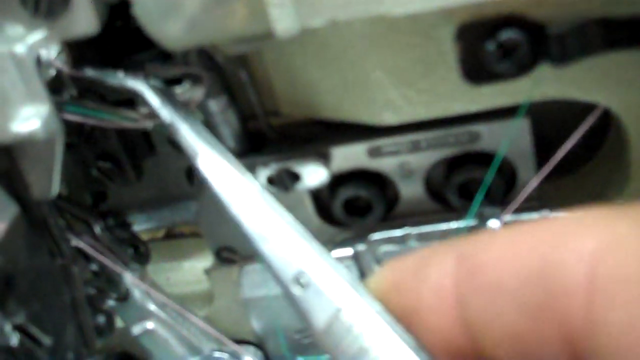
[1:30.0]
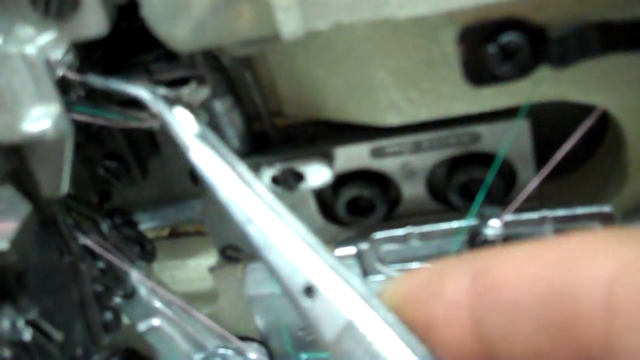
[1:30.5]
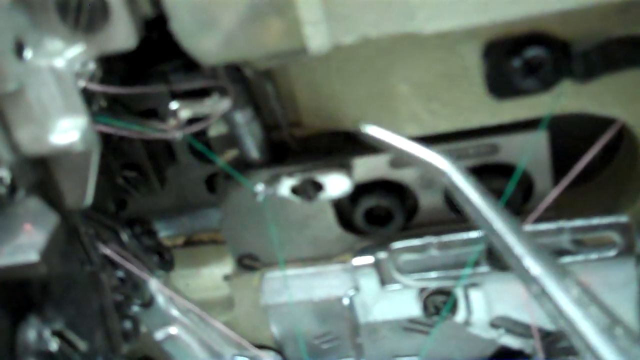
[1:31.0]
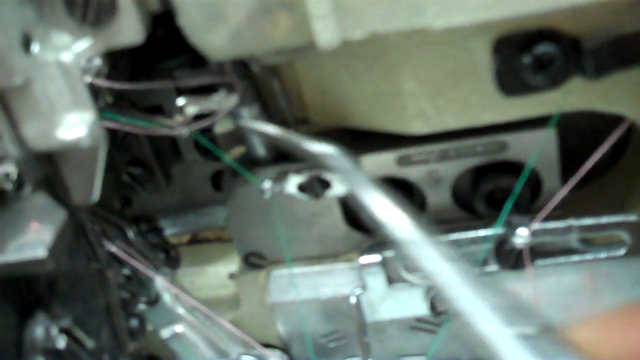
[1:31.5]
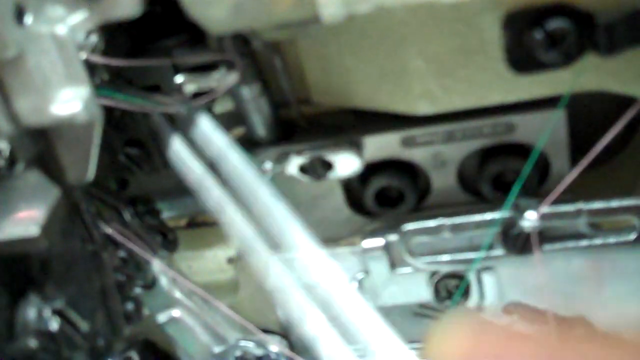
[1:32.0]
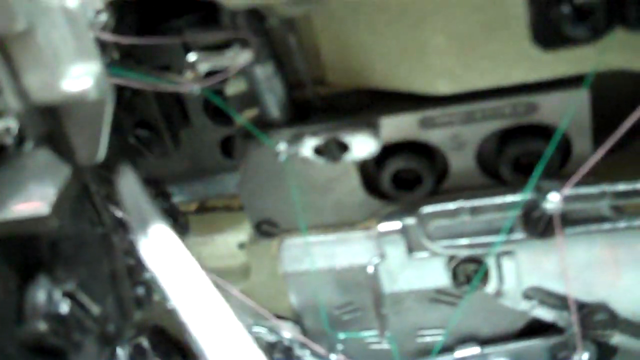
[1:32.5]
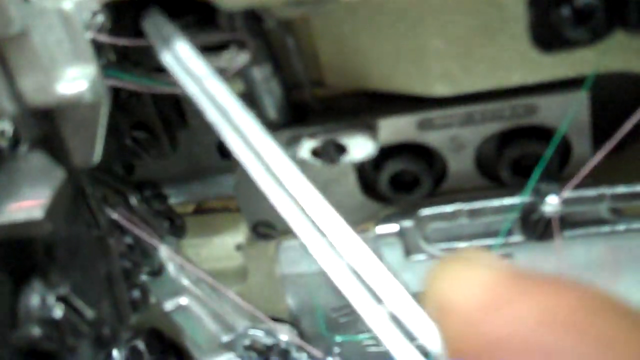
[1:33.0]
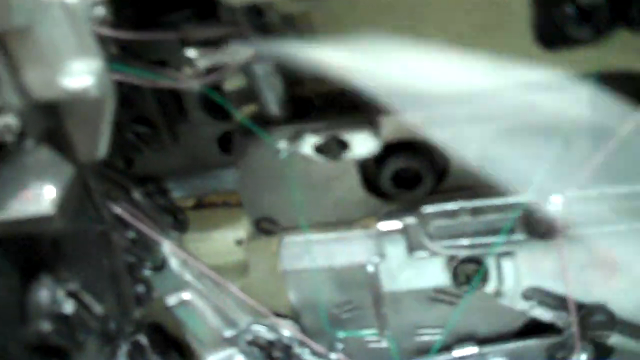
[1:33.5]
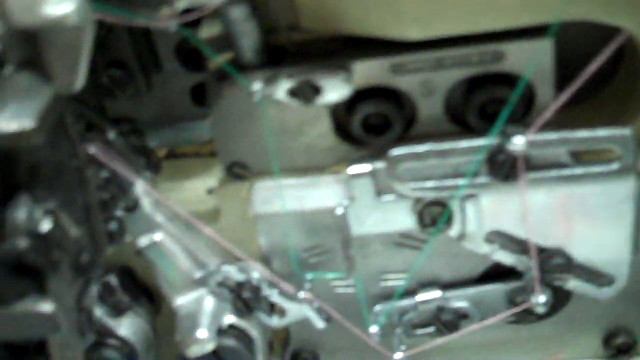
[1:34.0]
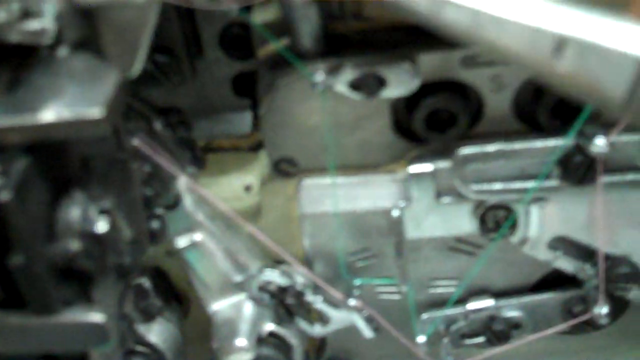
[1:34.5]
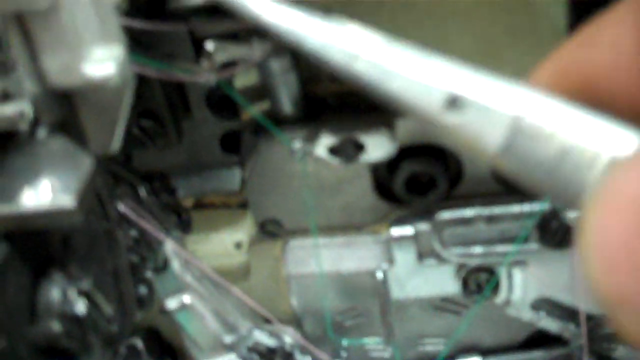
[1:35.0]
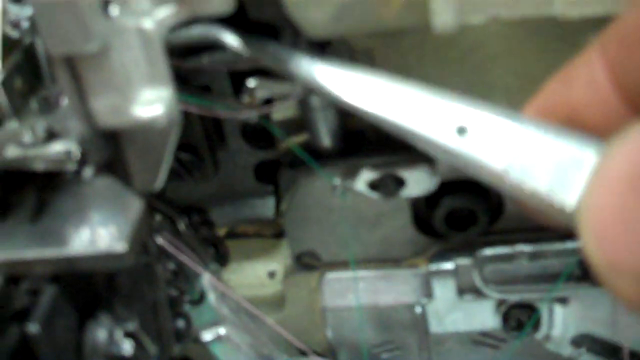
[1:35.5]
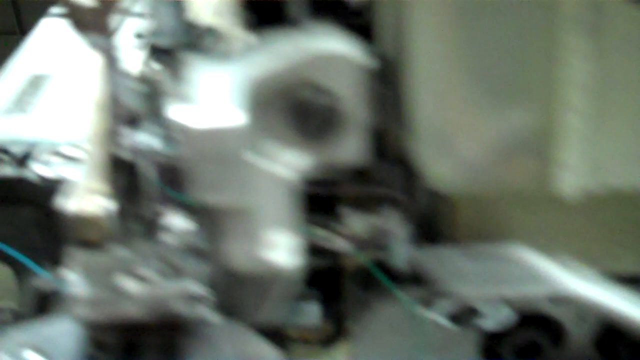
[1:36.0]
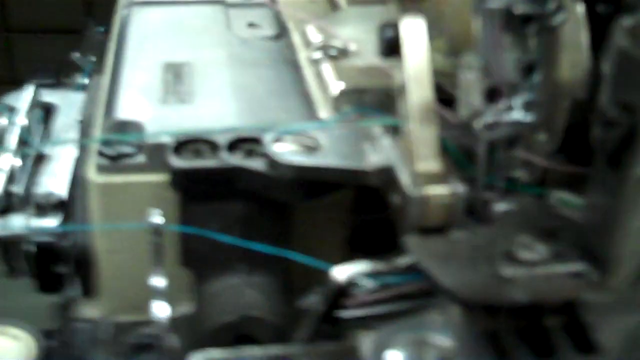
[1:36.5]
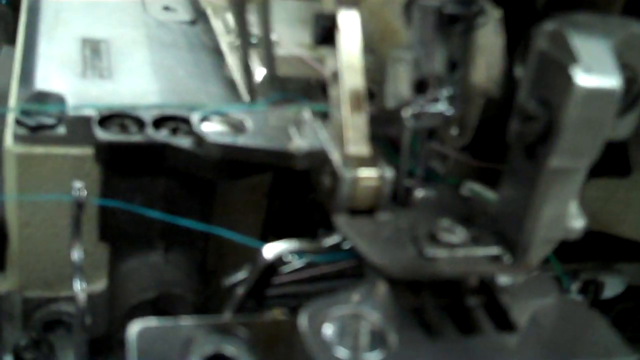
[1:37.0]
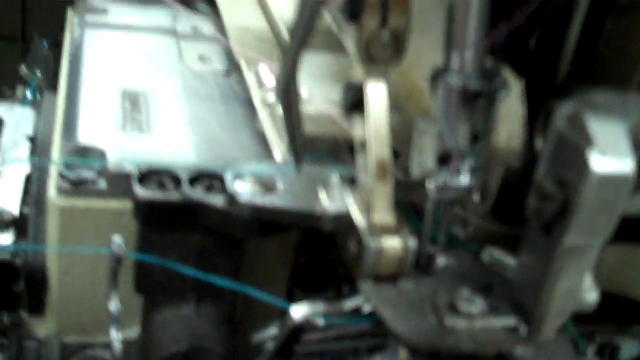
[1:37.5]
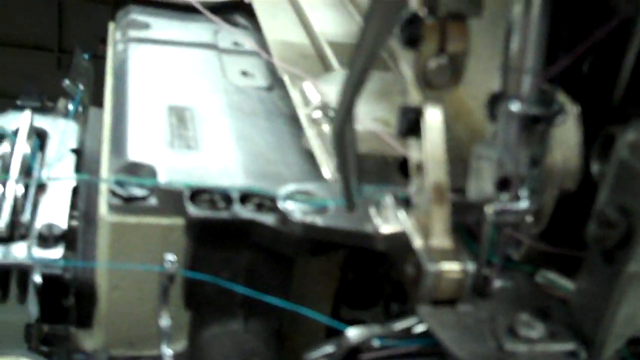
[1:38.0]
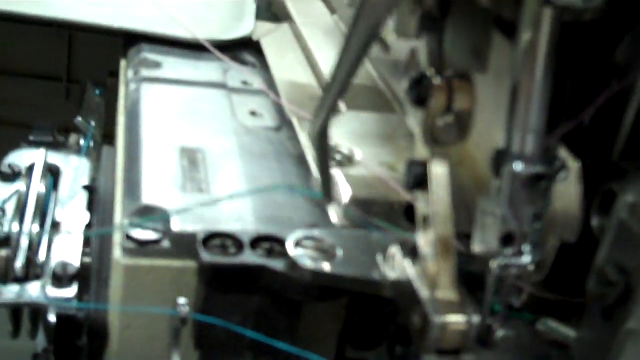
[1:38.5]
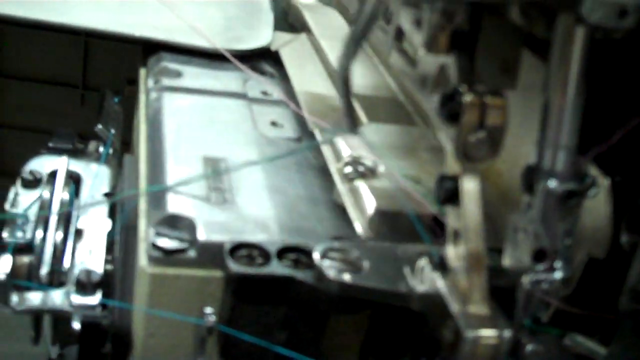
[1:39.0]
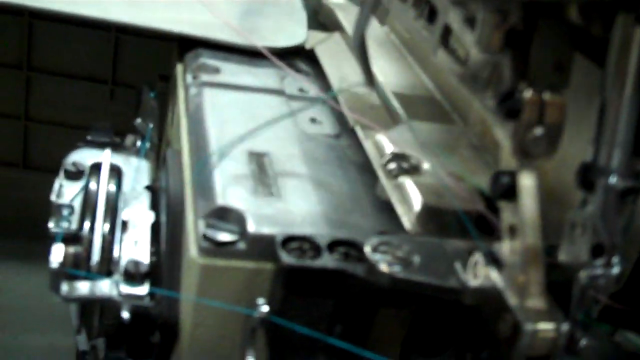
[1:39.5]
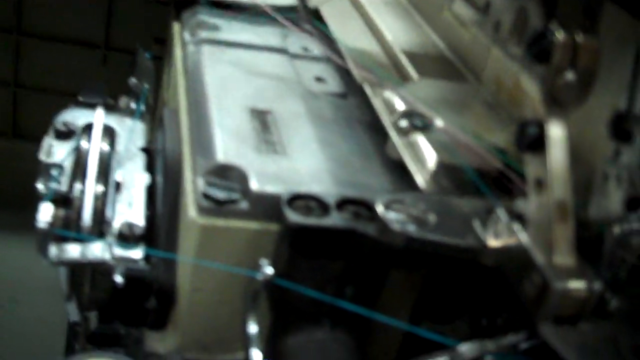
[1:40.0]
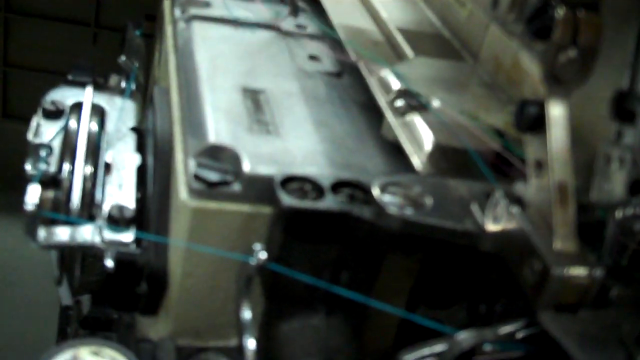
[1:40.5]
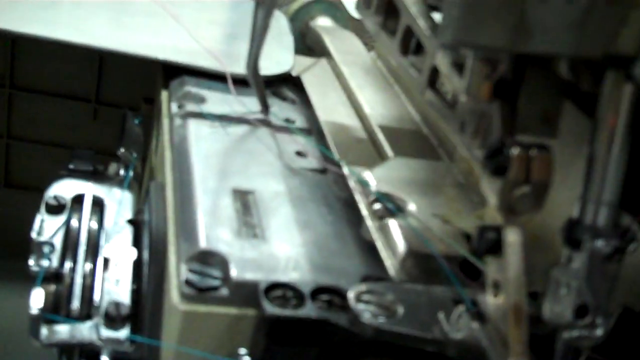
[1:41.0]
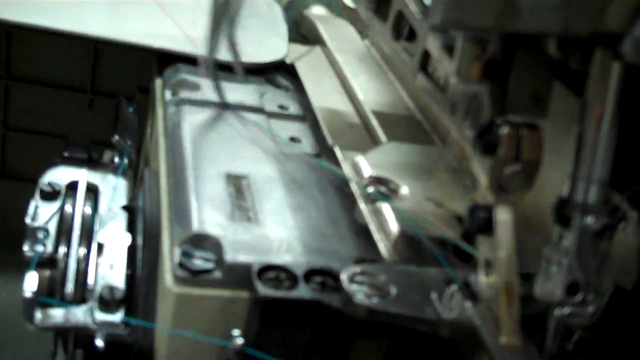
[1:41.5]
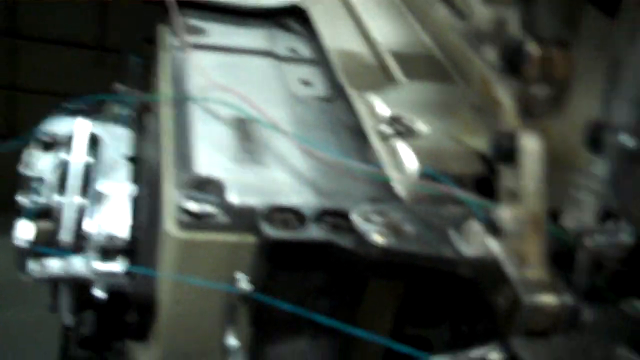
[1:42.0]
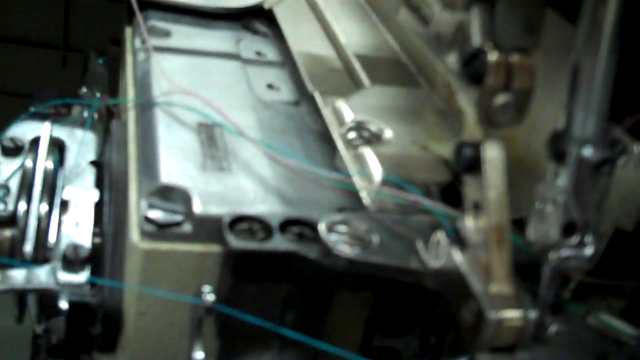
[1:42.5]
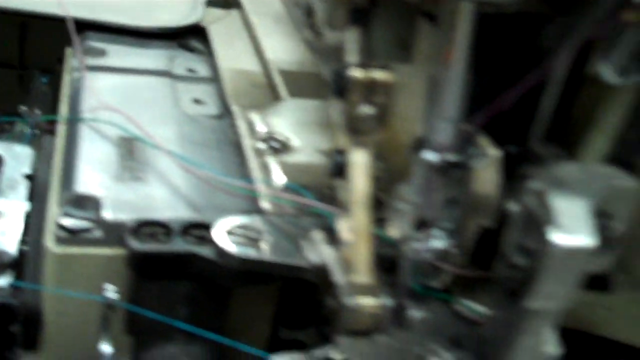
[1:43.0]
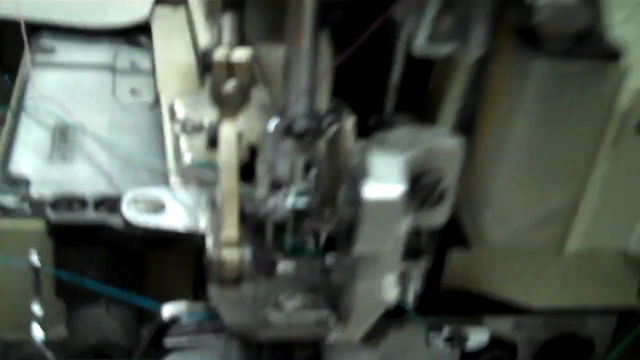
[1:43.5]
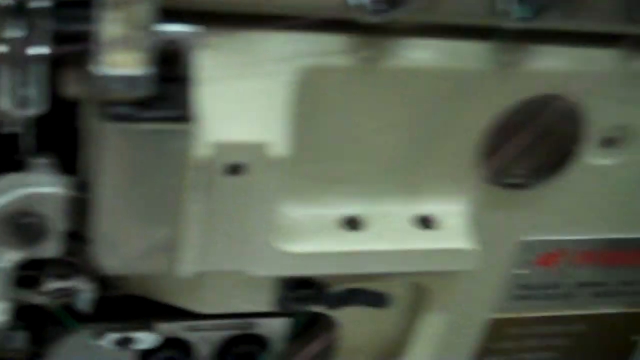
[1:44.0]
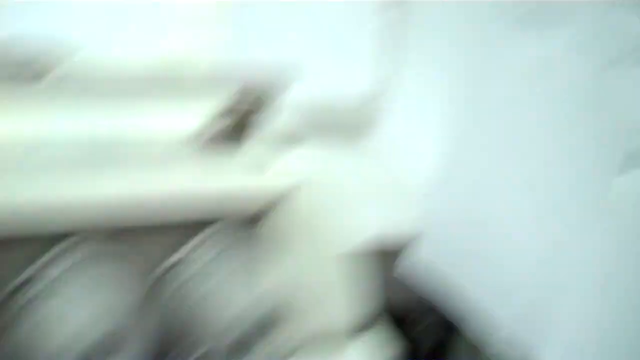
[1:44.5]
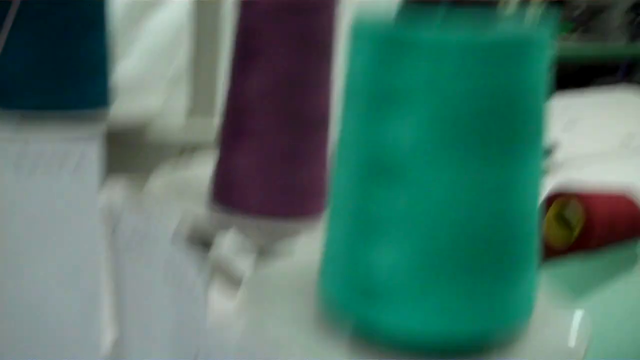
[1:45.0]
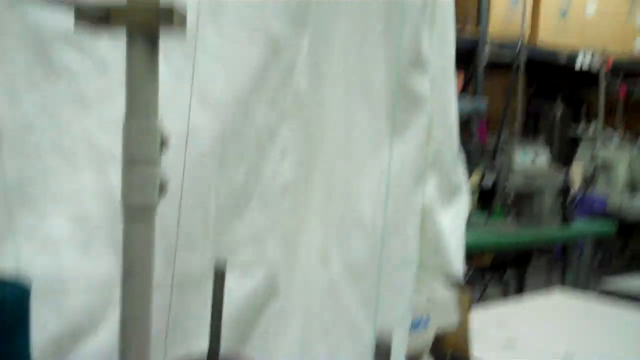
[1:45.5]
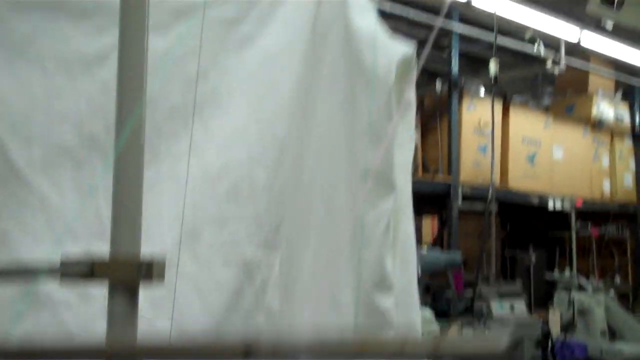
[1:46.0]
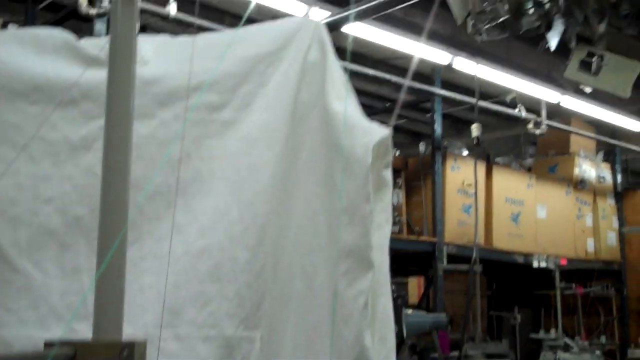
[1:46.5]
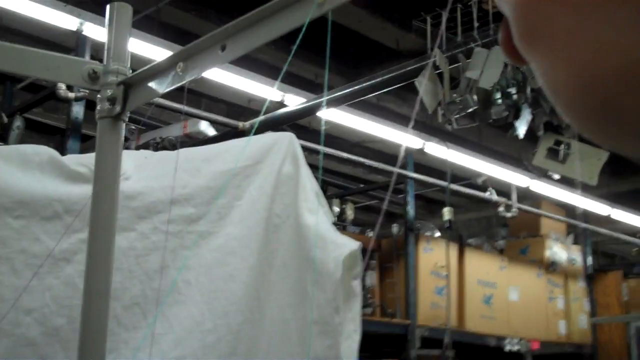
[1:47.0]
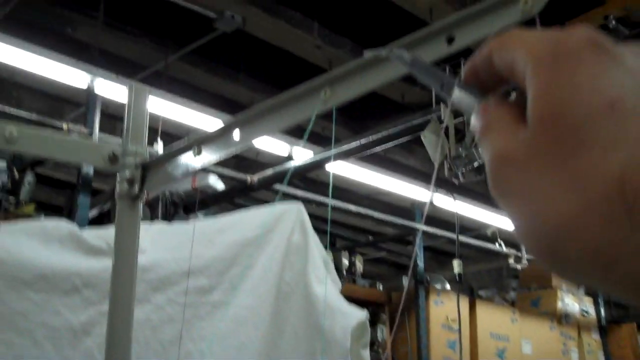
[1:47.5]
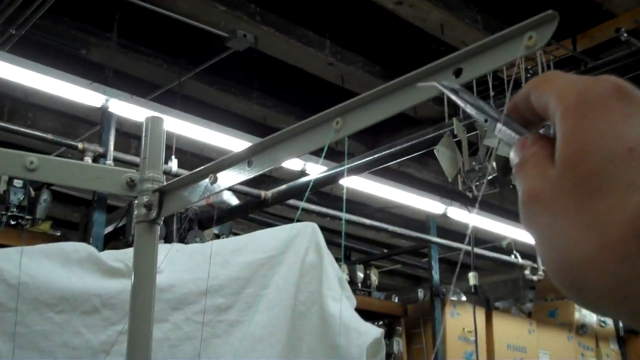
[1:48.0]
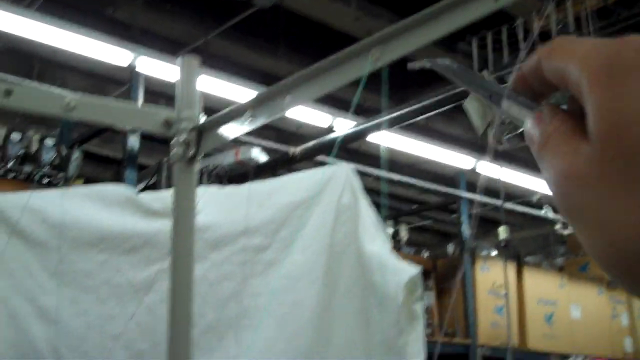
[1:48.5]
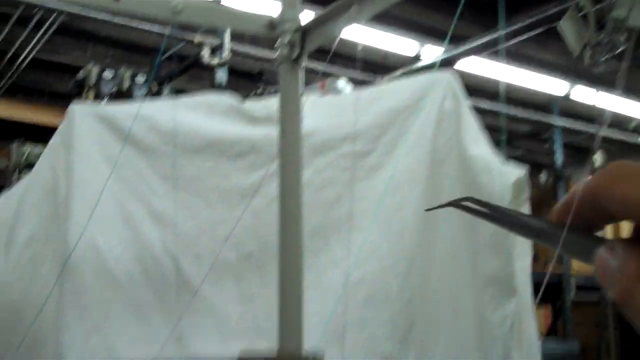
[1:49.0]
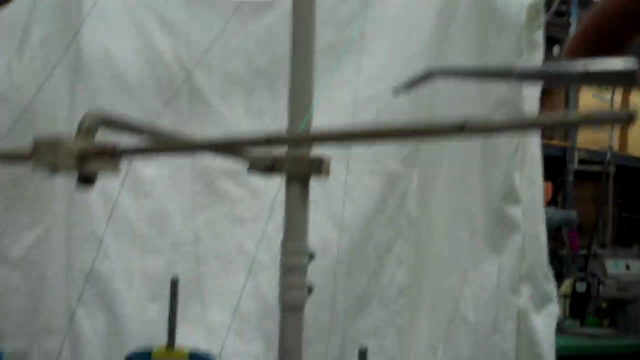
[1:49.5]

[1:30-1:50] A close-up of the back of the sewing machine shows the pink and green threads intertwined between the different metal pieces and screws. A hand holding a pair of tweezers starts to make adjustments to the threads; no metal parts of the machine are moving. The tweezers go to the left side of the machine, where more metal parts are visible, and pull out a long piece of the green thread, which is then placed closer to the pink thread. Both threads seem to be loose and lack tension. A shot then shows the purple and green spools of thread, with metal strips above them that have holes for the threads. Tweezers point toward the threads.